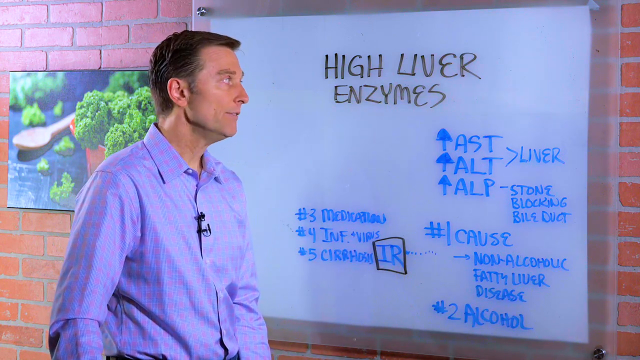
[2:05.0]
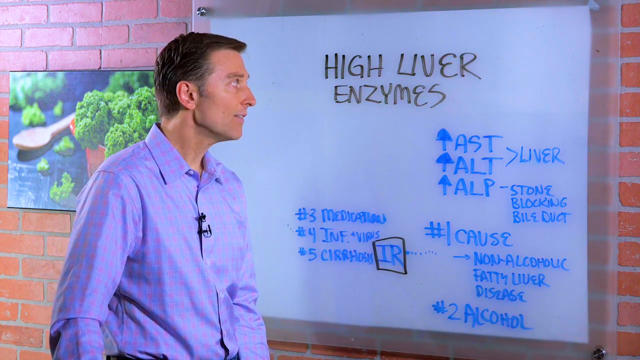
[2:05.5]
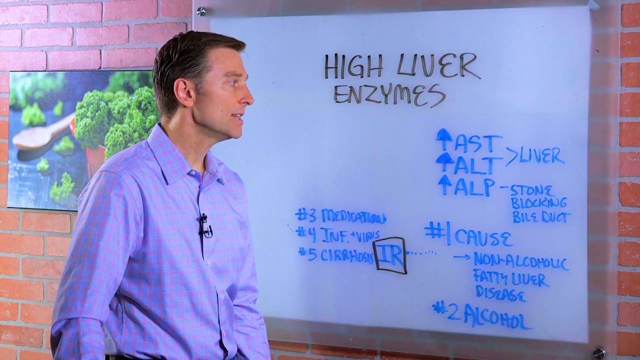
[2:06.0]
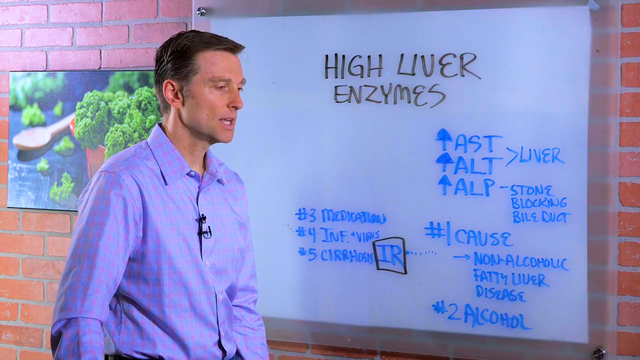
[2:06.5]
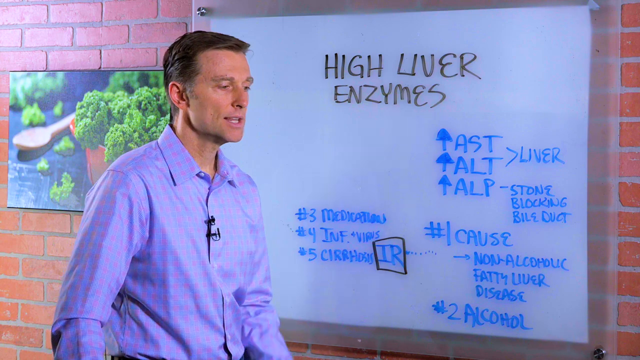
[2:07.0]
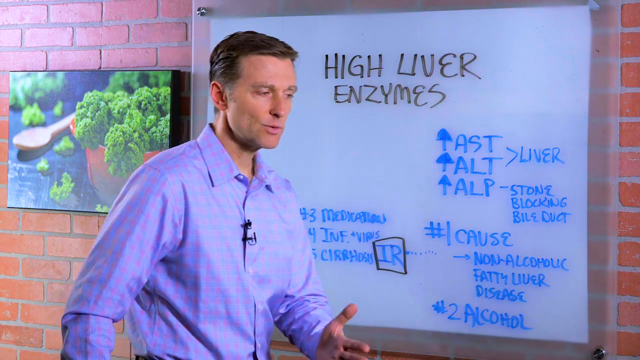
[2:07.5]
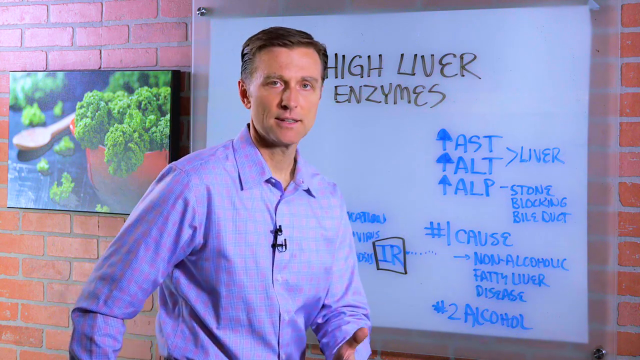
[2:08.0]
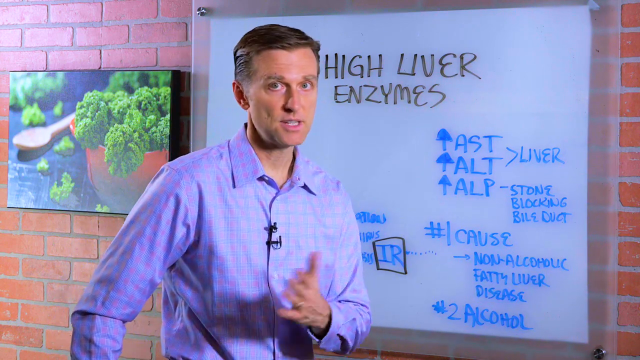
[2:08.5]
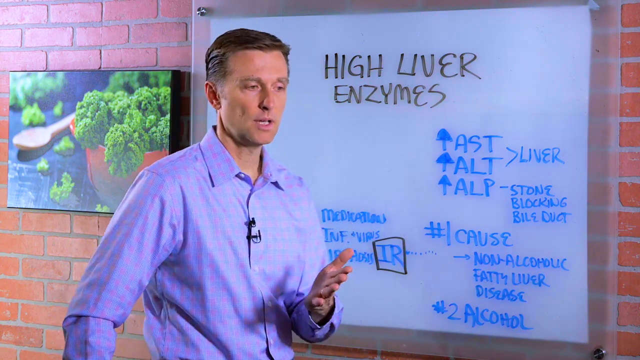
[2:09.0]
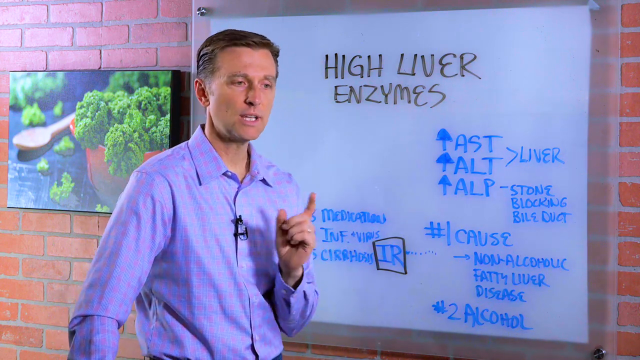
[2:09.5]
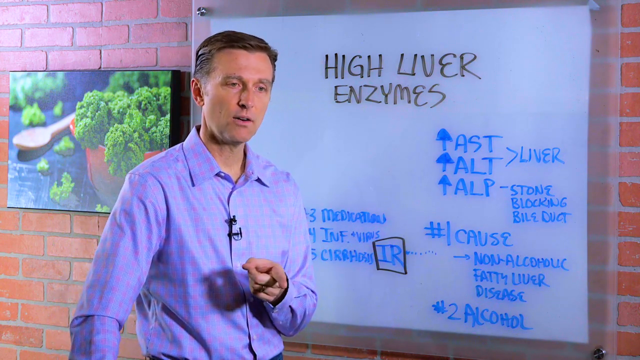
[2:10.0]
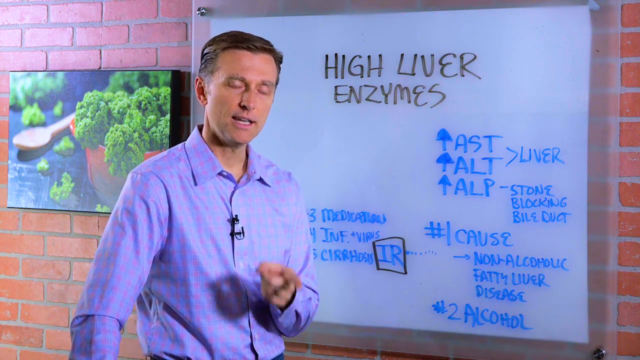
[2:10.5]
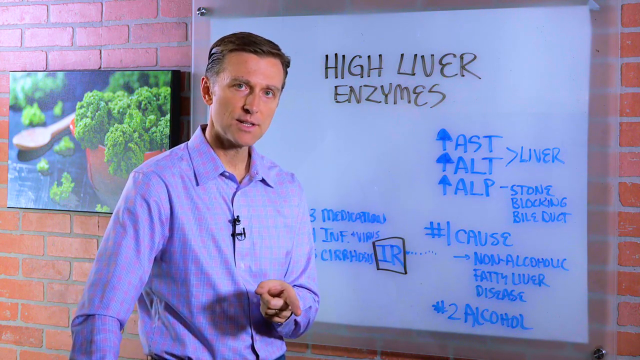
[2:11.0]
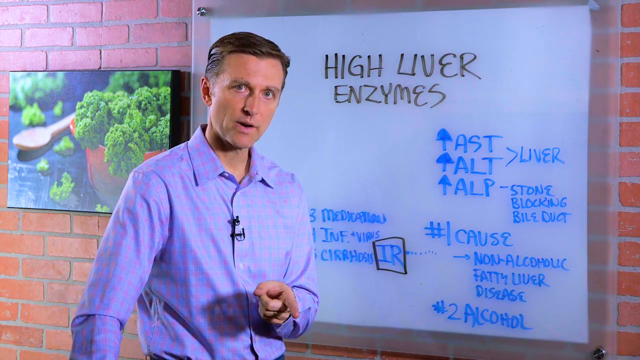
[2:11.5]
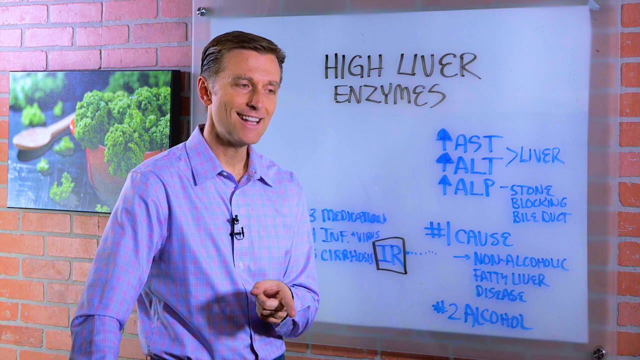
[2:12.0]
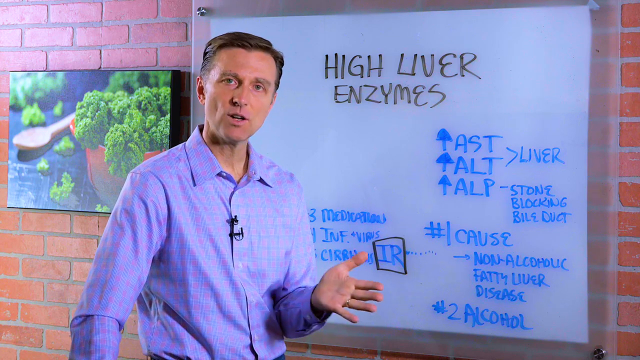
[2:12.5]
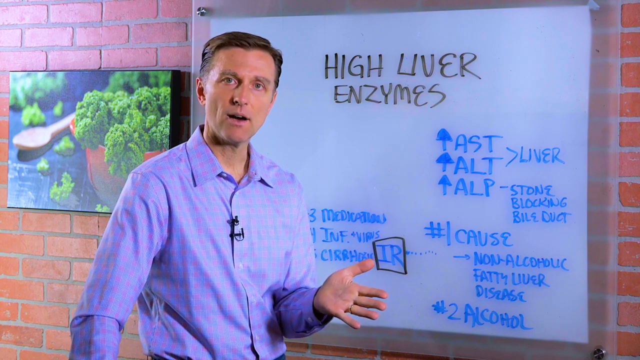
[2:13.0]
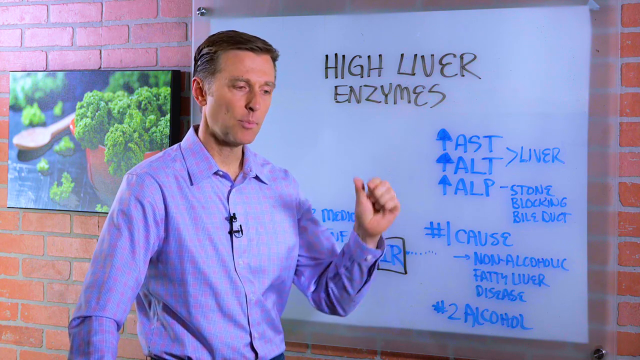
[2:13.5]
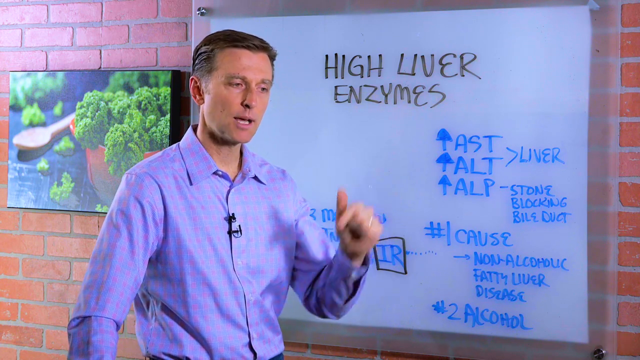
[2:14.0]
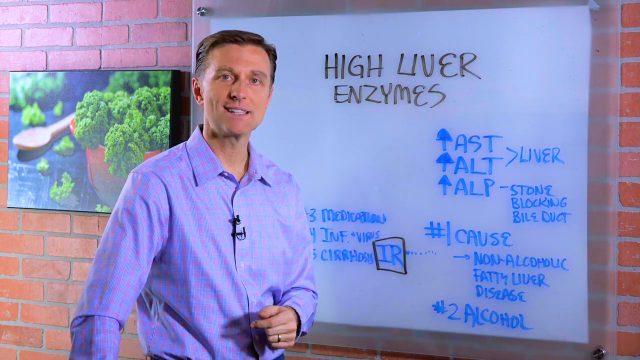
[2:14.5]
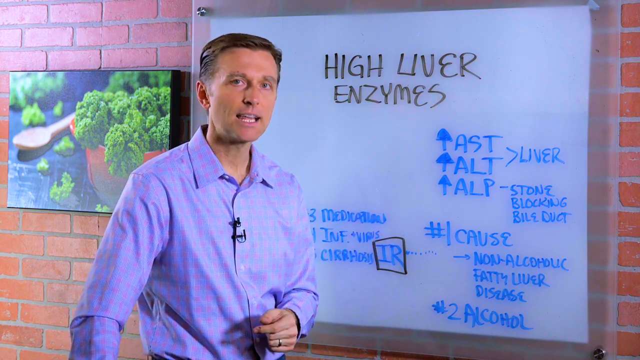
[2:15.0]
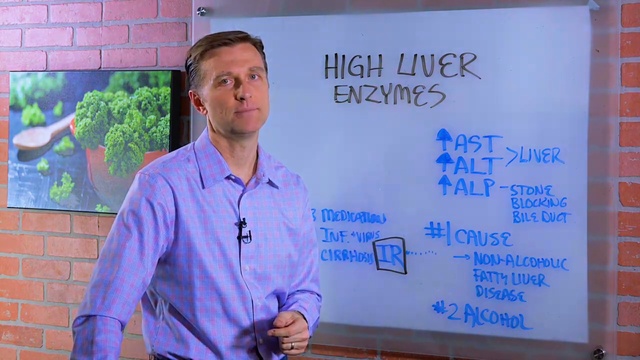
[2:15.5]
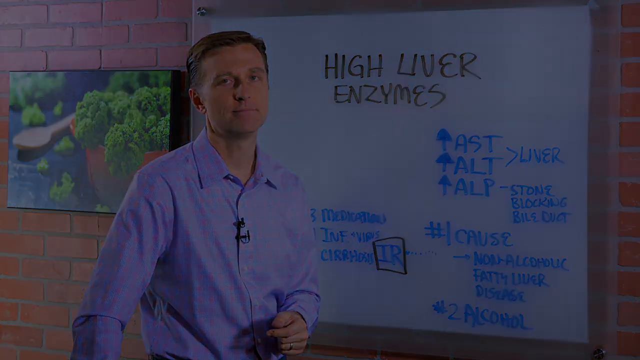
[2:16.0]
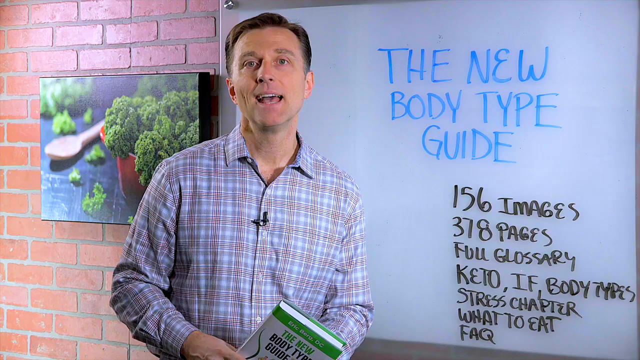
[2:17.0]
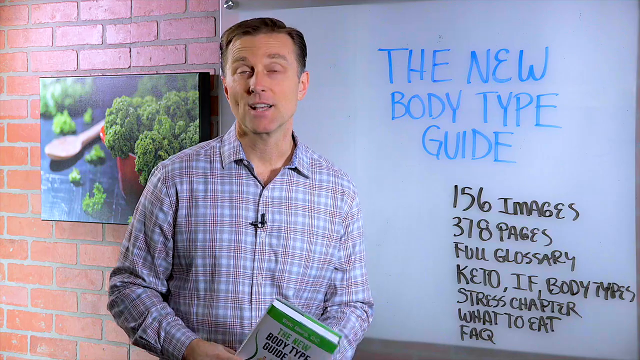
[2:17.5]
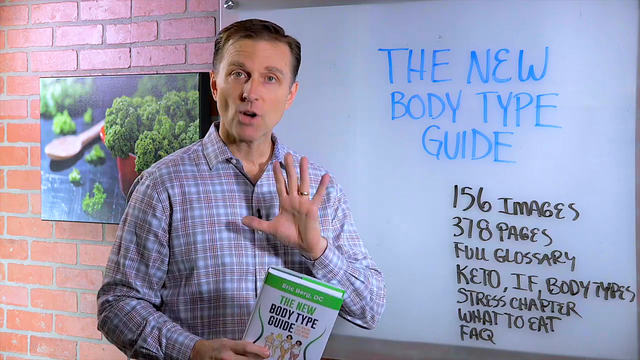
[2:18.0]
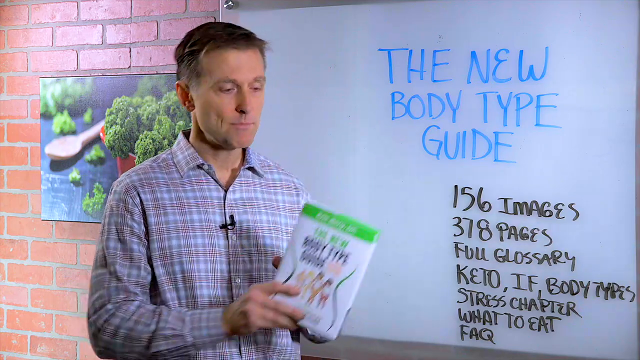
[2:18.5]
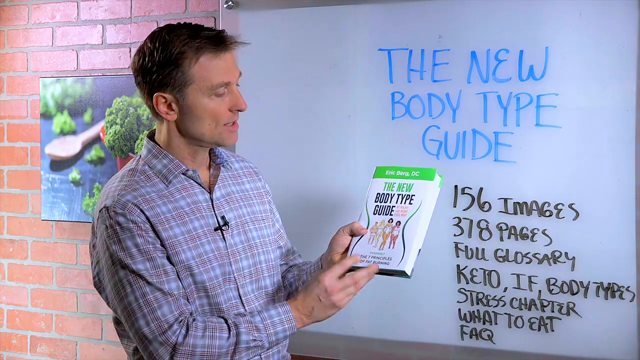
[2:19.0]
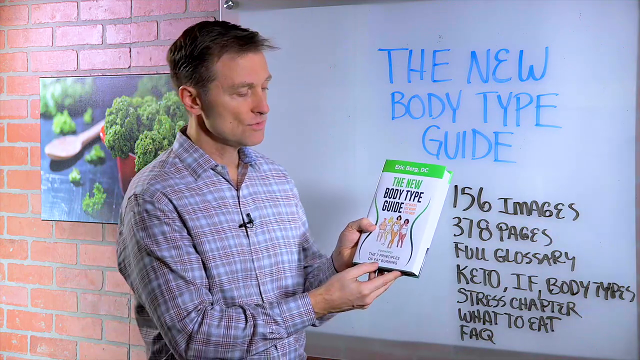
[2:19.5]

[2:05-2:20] The man looks at the board, makes a motion with his hand, points his fingers toward it, opens his hand, and holds his thumb up as he speaks. The video cuts to the same man wearing a different striped brown, tan and white shirt, still with a microphone, holding a white and green book. The book's title is in big black letters, "the new body type guide," and there are pictures of bodies on the front. He makes a waving motion with his hands and gives a thumbs up. The video cuts back to the original footage of the man, who makes a number one with his hand, opens and waves his hand, and gives a thumbs up. In the book shot he holds a thumbs up while holding the book and shows a number five with his hand before the camera cuts again.